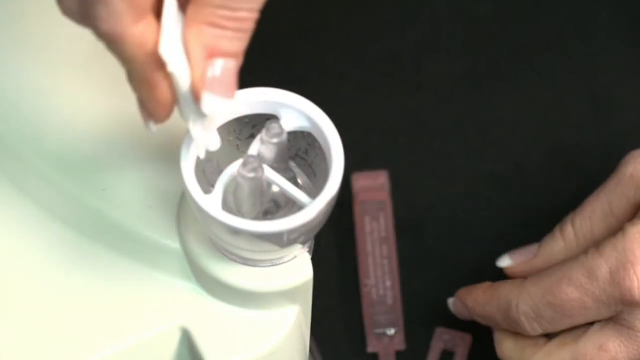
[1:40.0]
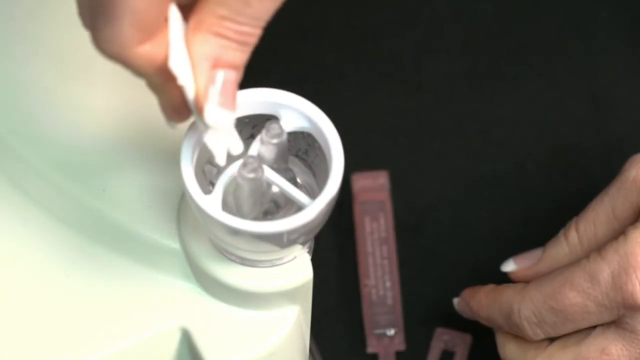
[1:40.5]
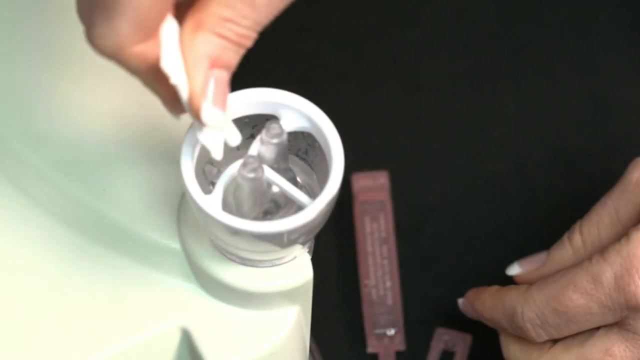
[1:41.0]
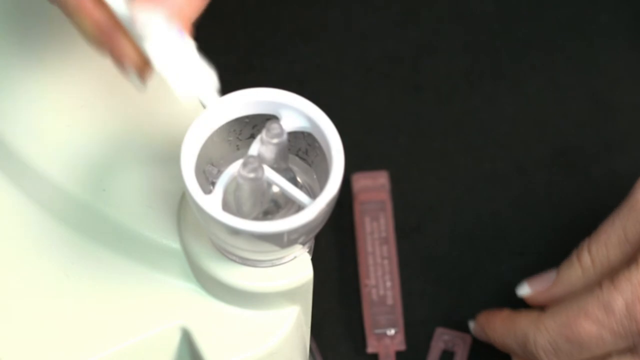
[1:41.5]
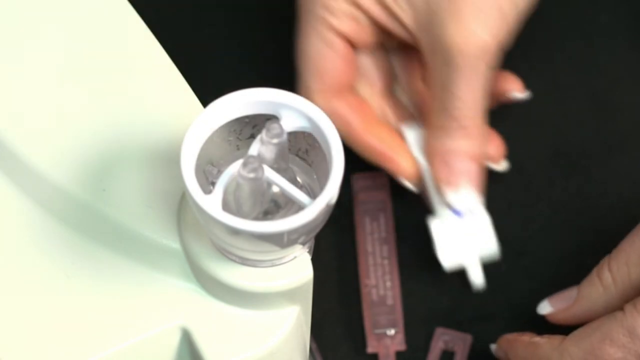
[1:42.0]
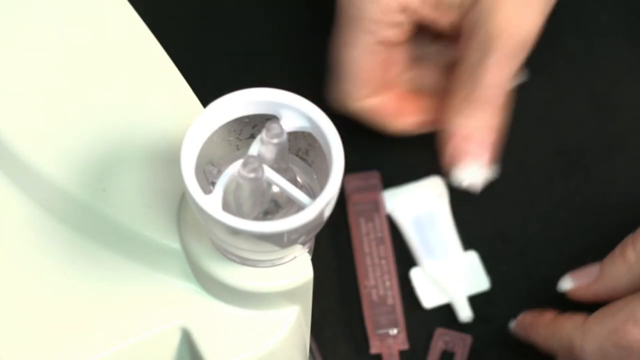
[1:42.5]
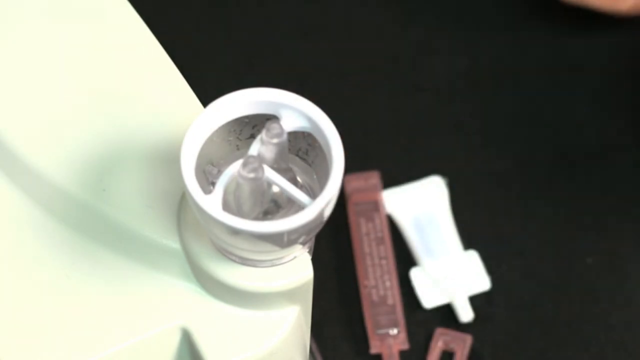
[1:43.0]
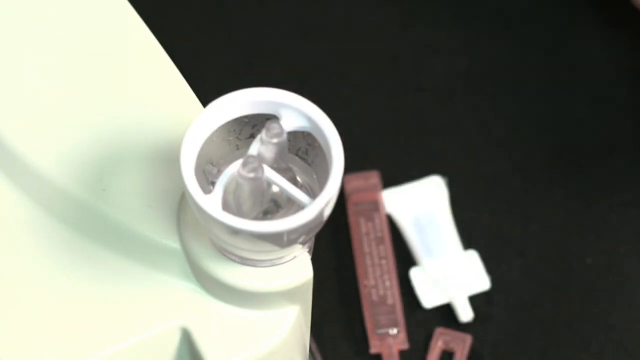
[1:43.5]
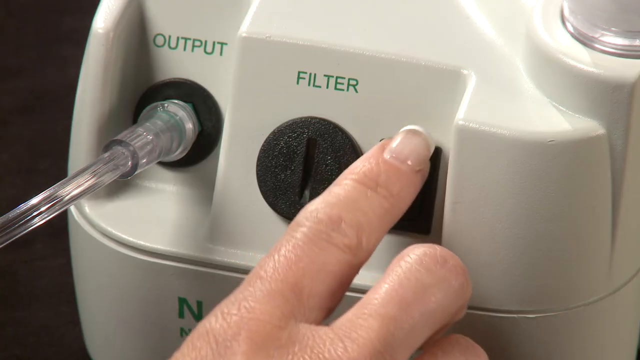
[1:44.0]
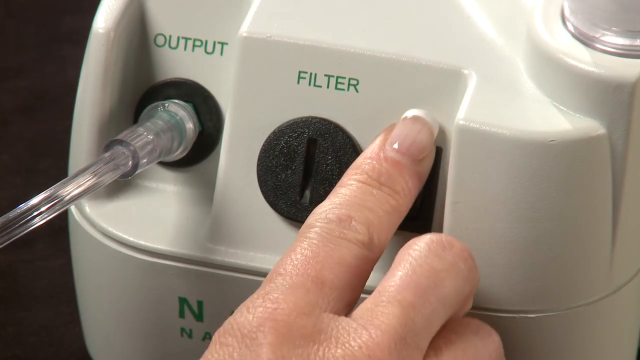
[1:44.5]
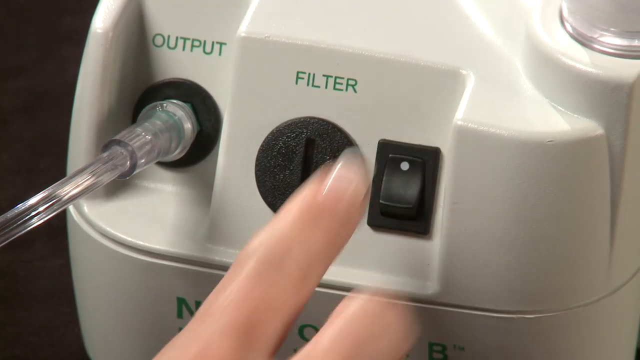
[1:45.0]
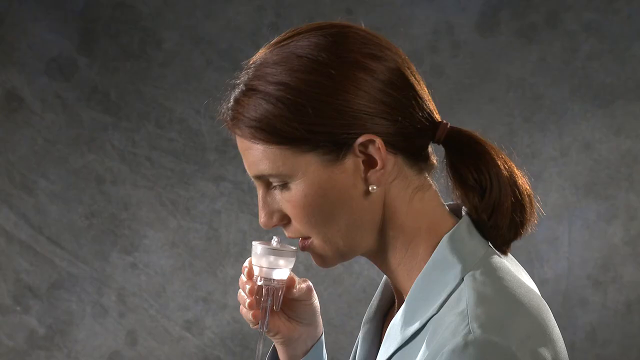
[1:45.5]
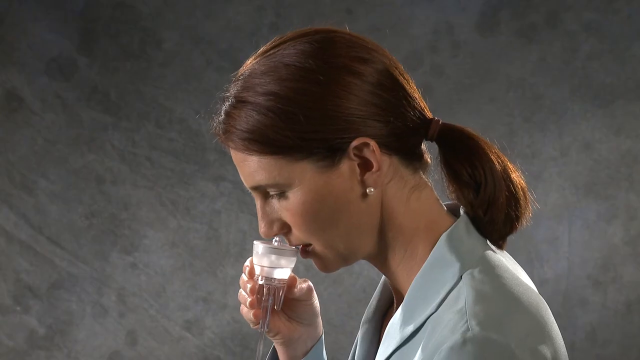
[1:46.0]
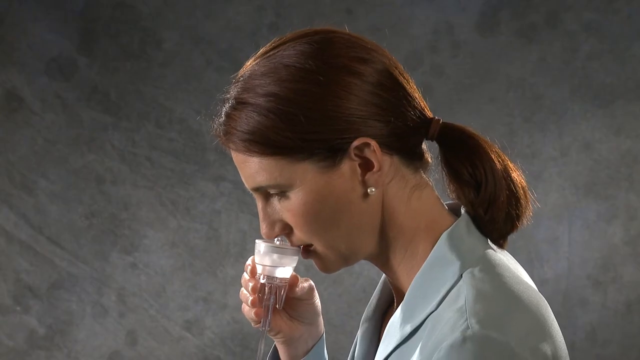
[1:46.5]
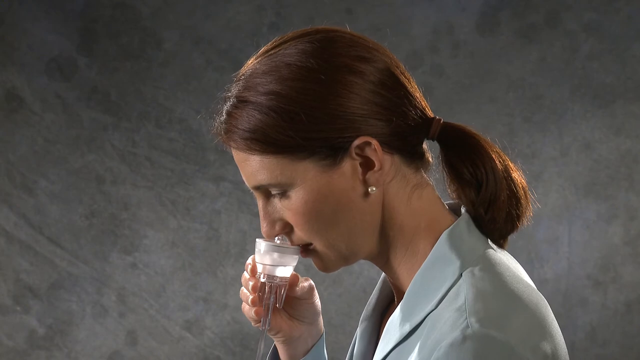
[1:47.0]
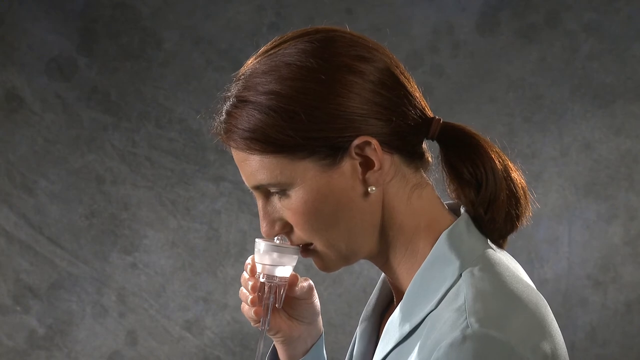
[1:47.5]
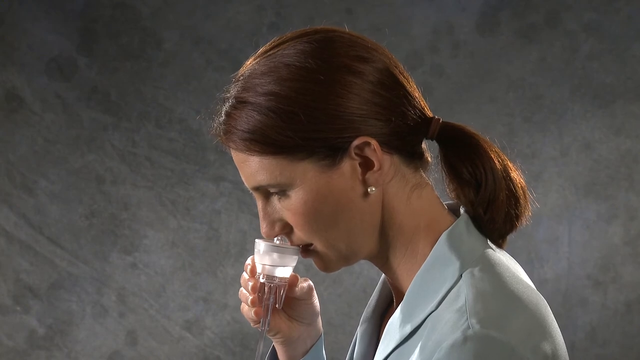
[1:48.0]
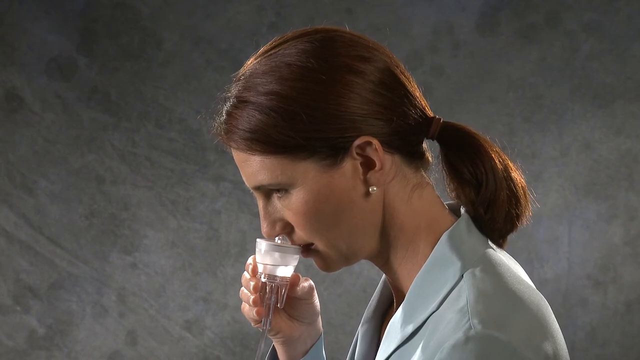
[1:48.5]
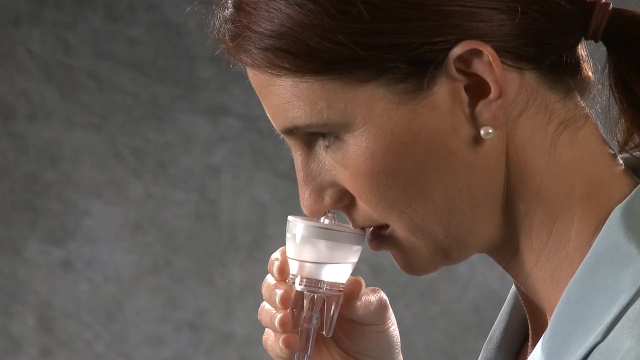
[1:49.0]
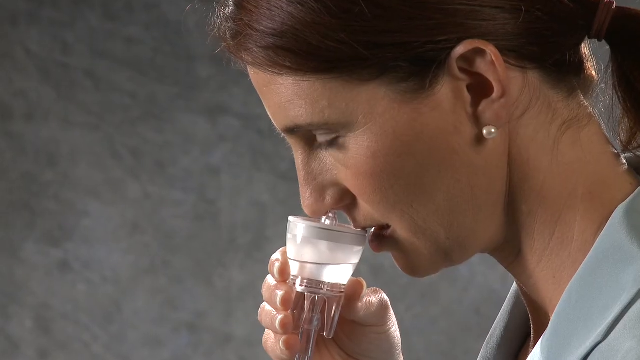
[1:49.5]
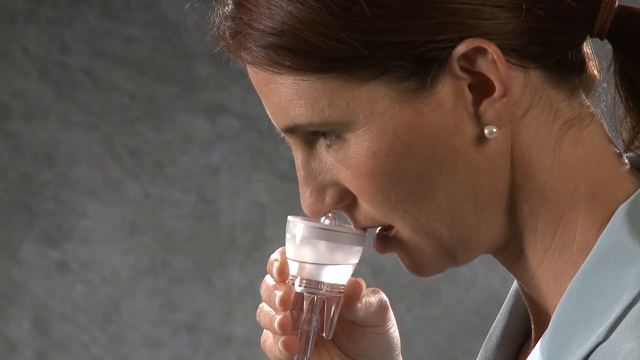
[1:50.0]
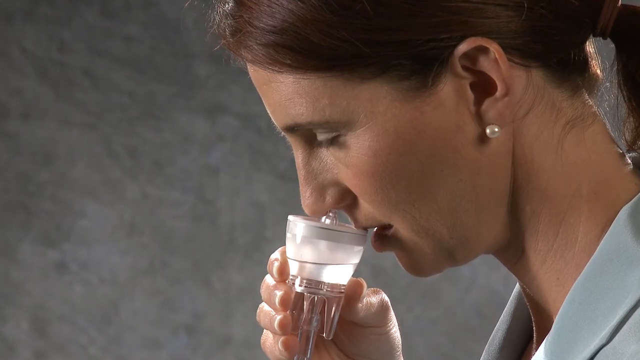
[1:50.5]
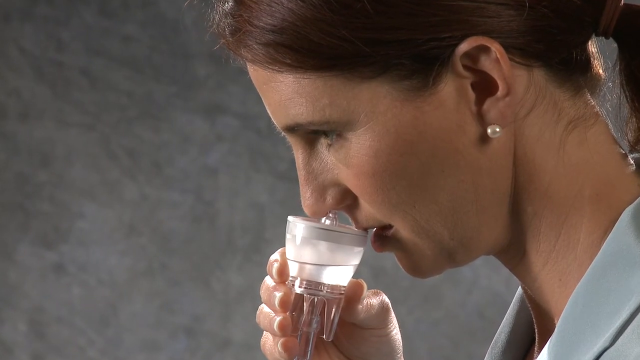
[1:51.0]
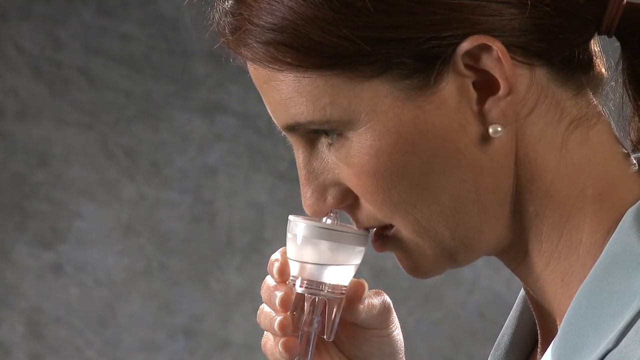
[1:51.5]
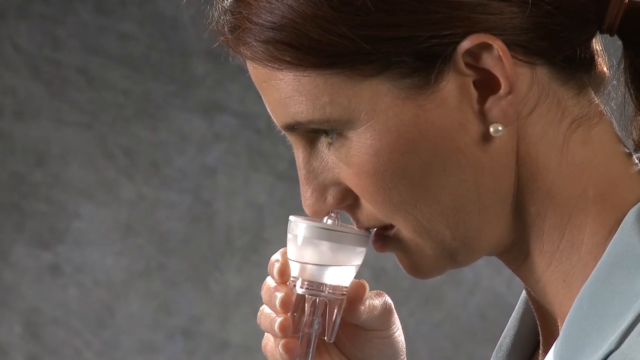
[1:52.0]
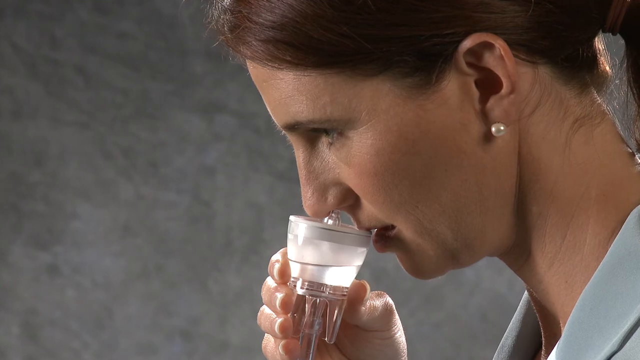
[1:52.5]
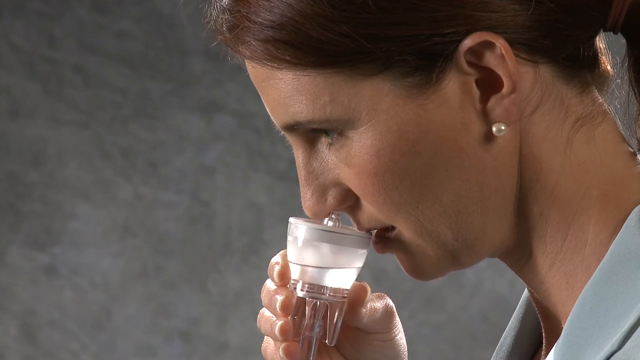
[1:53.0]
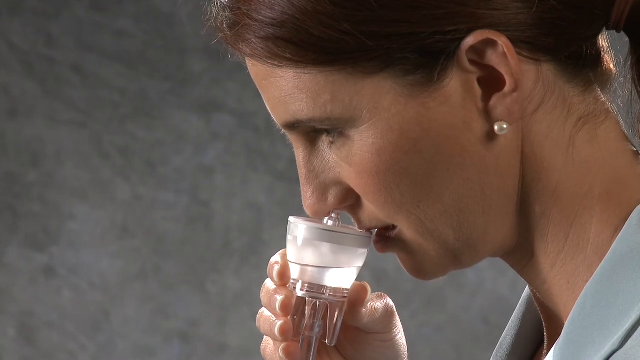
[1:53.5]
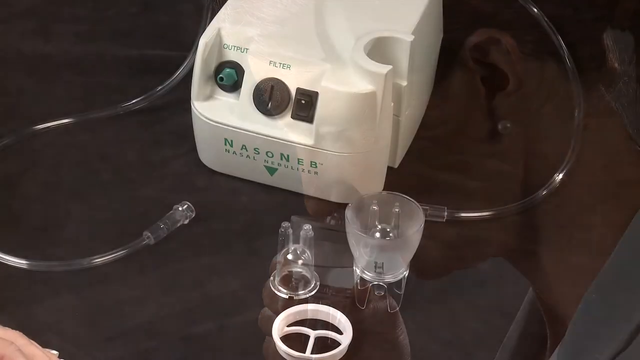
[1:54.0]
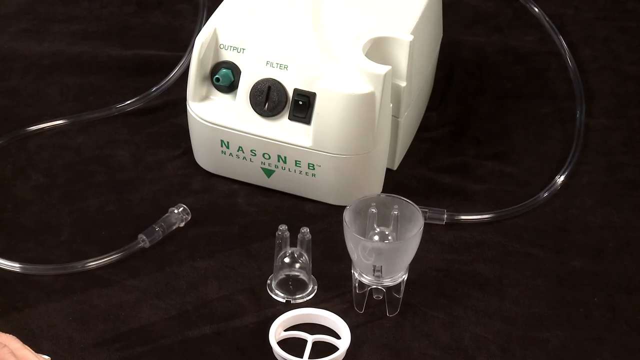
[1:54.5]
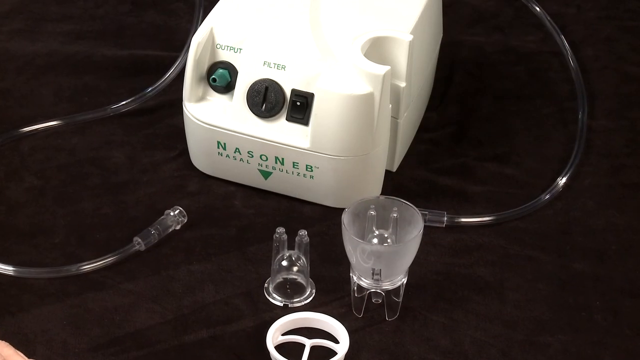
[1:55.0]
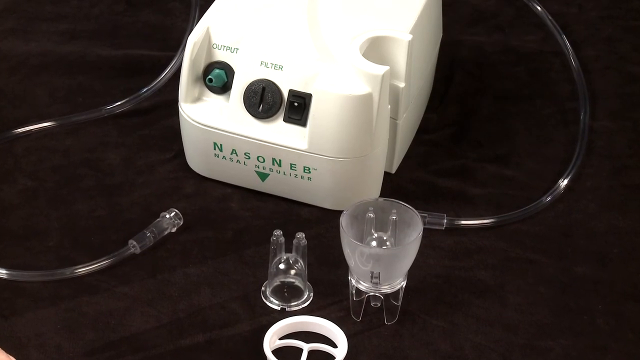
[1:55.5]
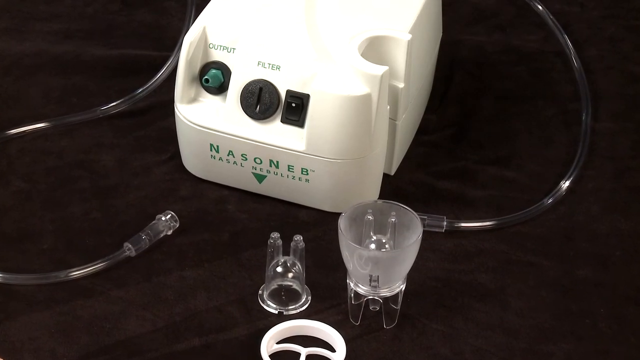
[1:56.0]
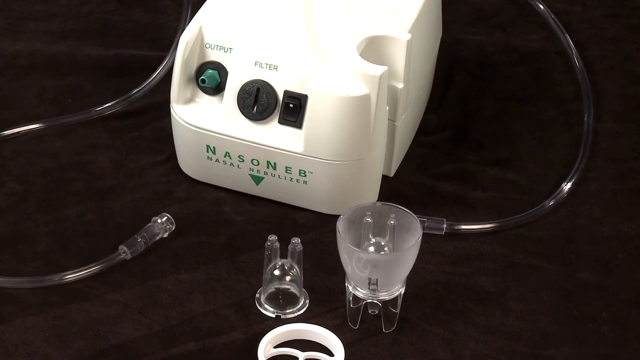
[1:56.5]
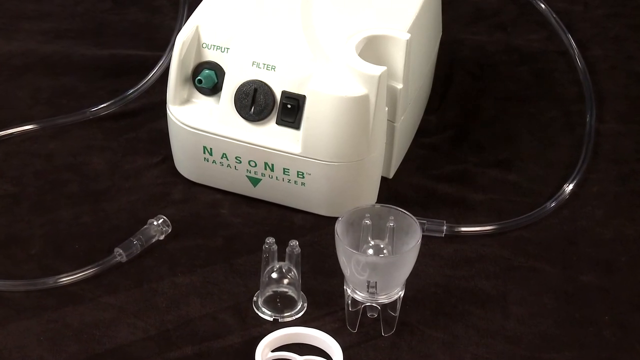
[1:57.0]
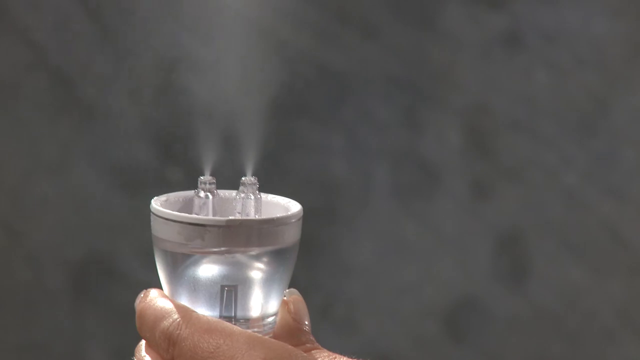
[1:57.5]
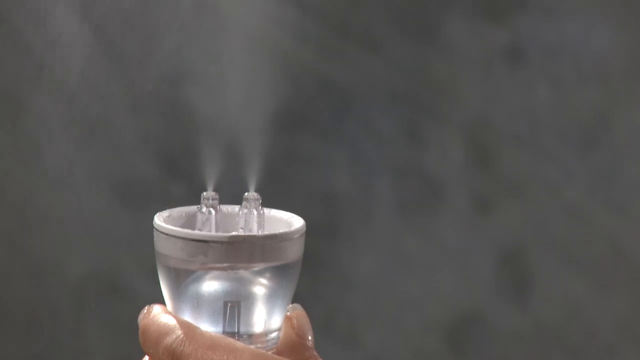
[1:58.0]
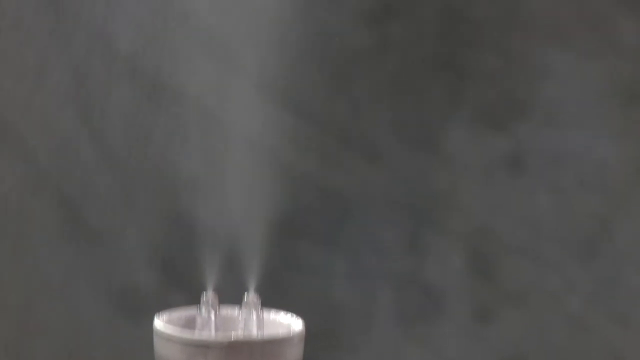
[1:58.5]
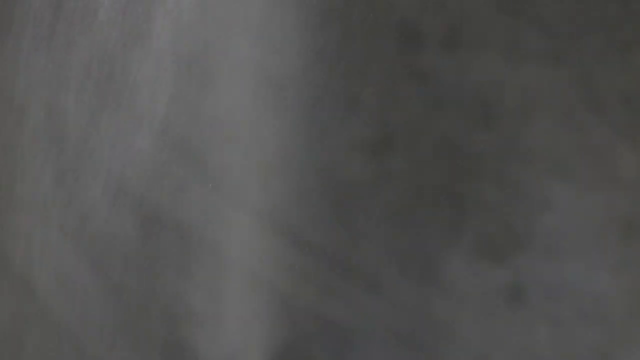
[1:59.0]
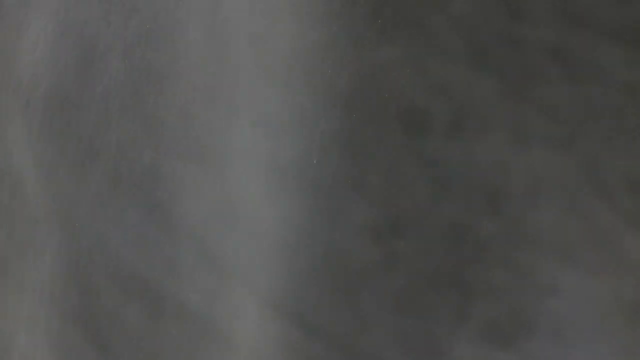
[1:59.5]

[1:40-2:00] The female doctor squeezes some liquid onto the nasal piece and then adds another liquid. She operates the machine, turning on the switch, then picks up the nasal piece and puts it to her mouth. The liquid is visible inside the transparent nasal piece, and the nasal piece sprays the liquid onto her nose as she demonstrates how the spraying works. The liquid shoots up through the nasal piece from the machine's pressure, with the transparent pipe coming out of the machine and entering the nasal piece. She wears earrings that are a bit white. The pressure of the machine looks quite strong, given the amount of medicine coming out.